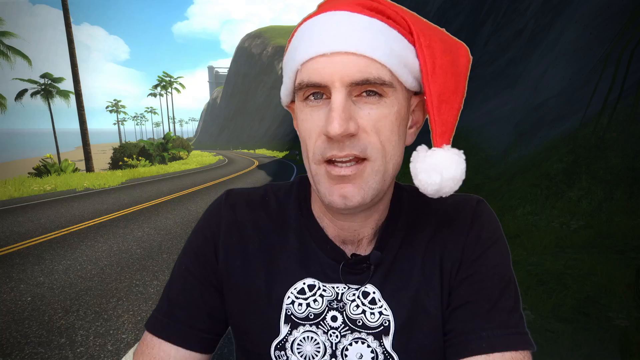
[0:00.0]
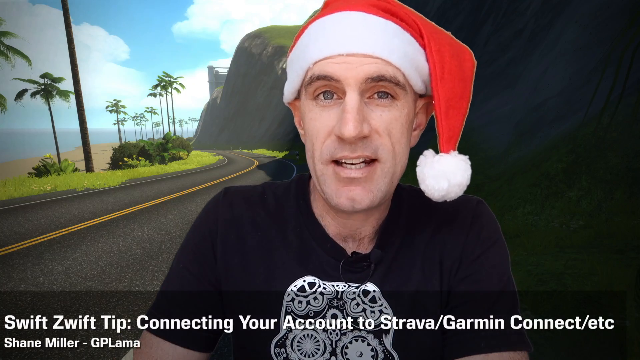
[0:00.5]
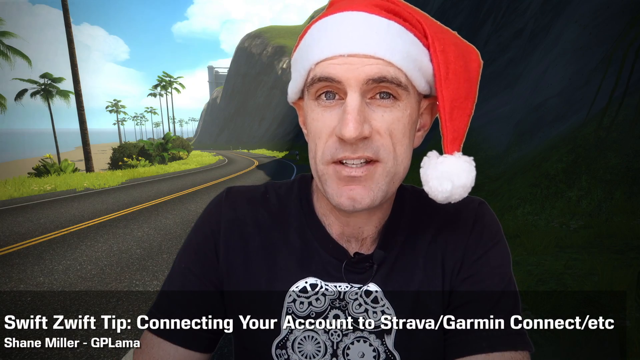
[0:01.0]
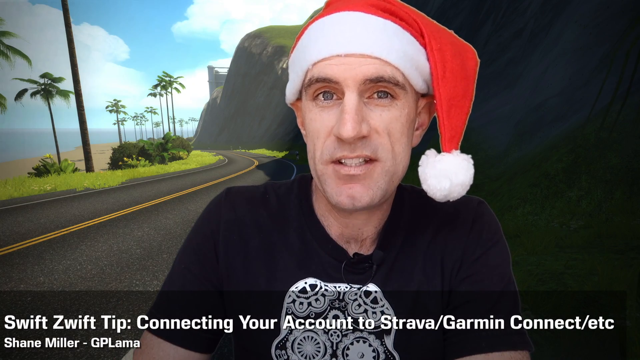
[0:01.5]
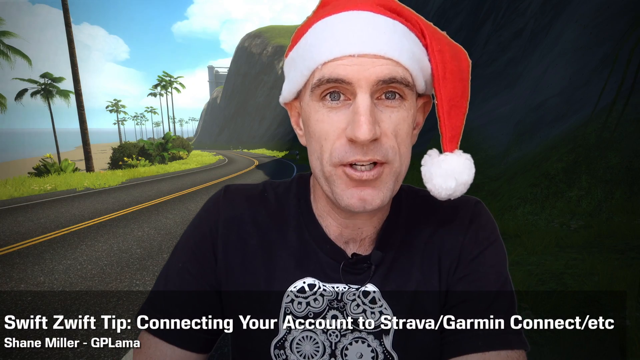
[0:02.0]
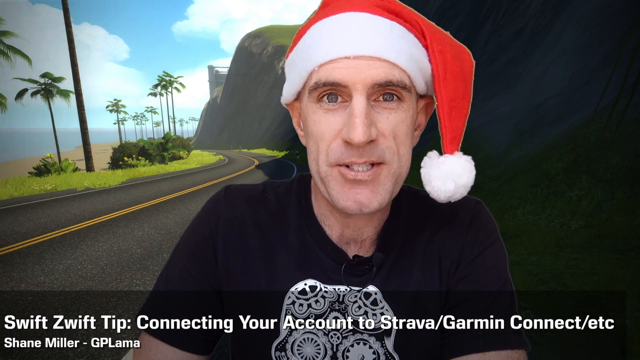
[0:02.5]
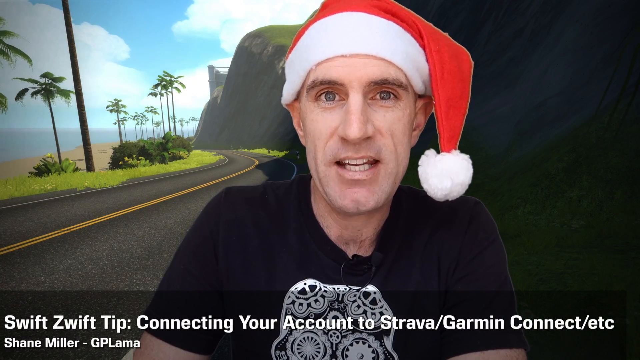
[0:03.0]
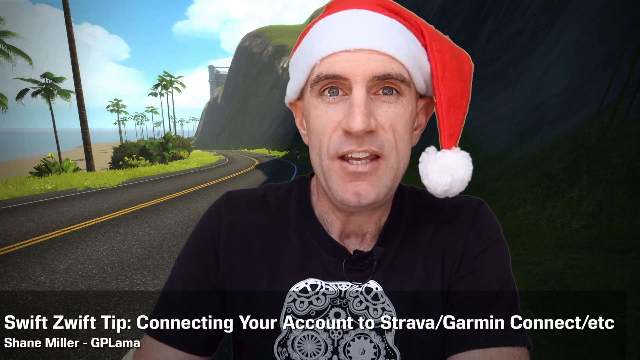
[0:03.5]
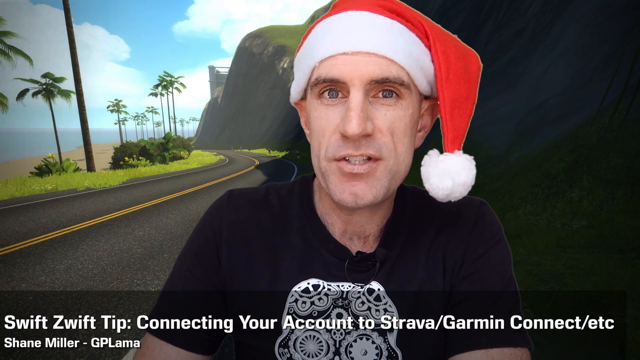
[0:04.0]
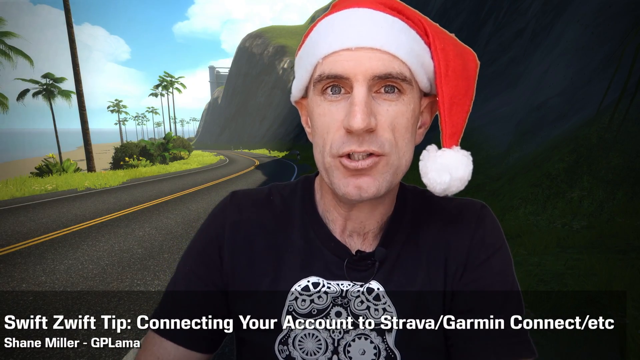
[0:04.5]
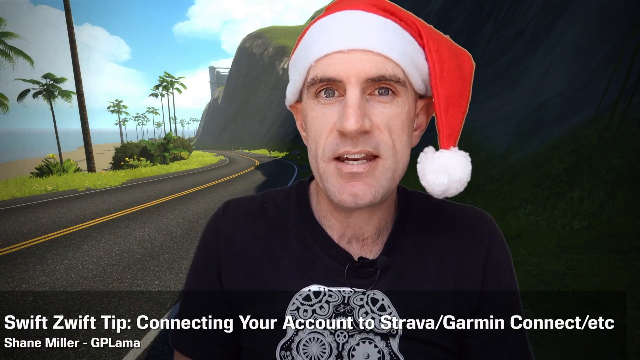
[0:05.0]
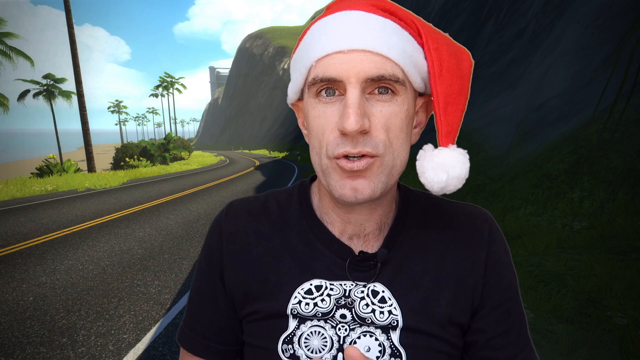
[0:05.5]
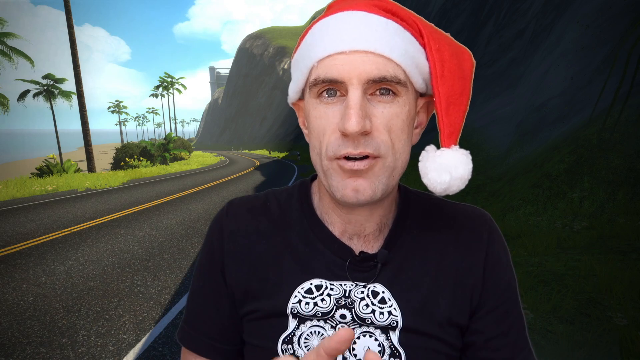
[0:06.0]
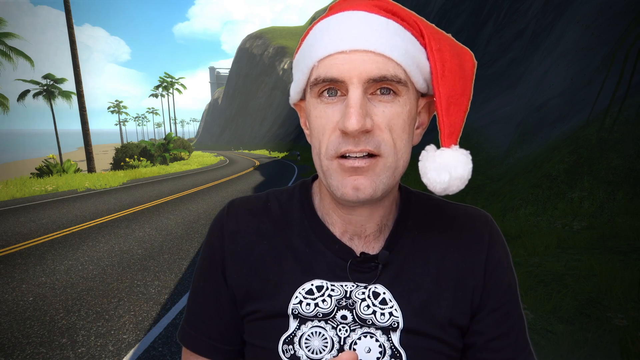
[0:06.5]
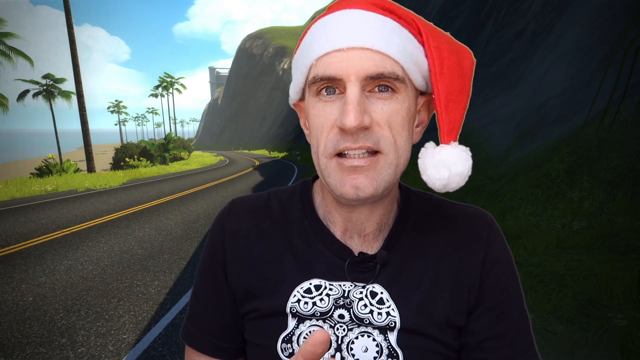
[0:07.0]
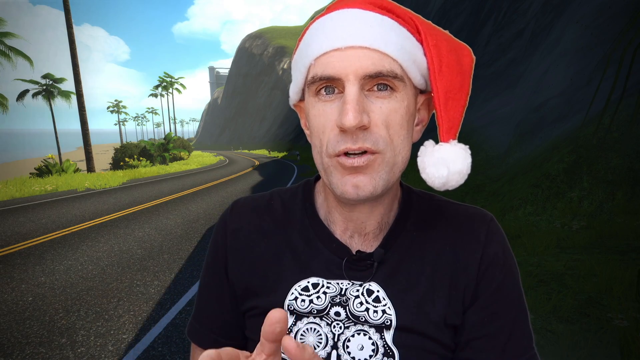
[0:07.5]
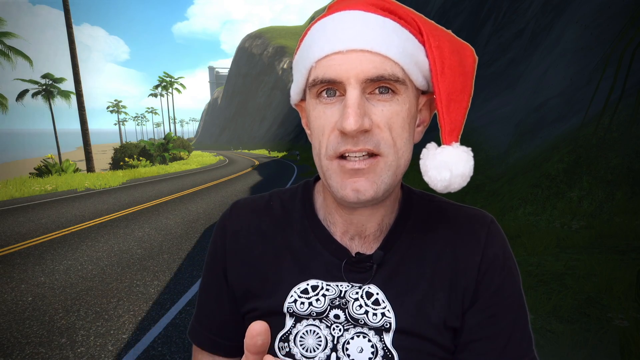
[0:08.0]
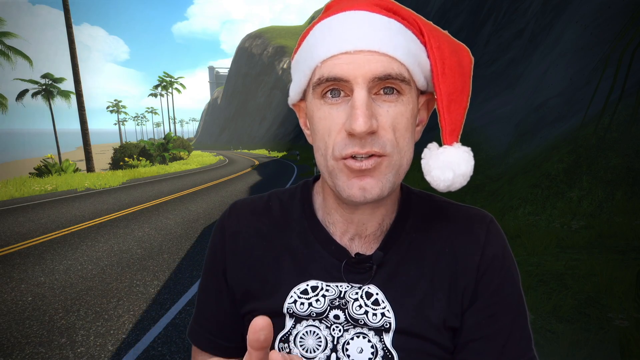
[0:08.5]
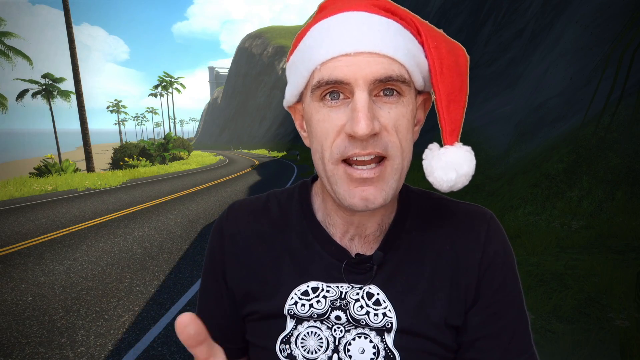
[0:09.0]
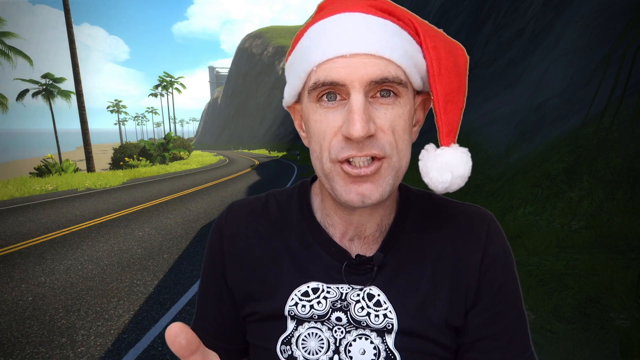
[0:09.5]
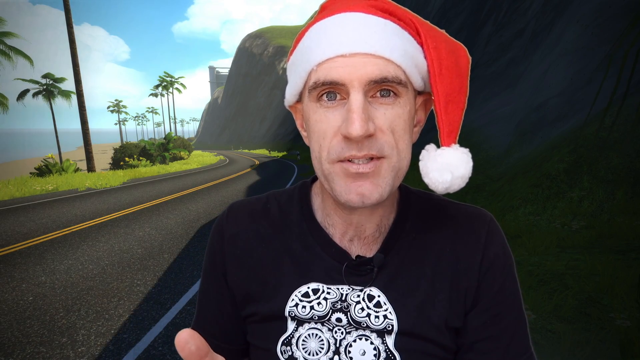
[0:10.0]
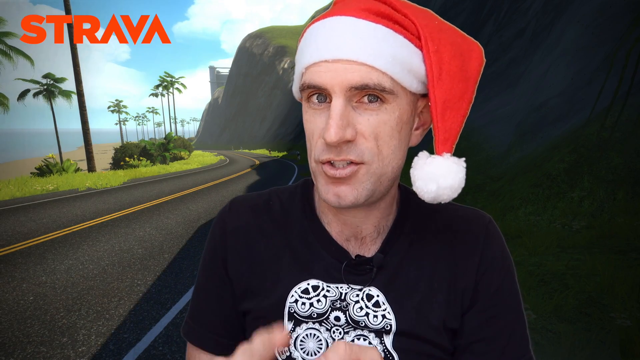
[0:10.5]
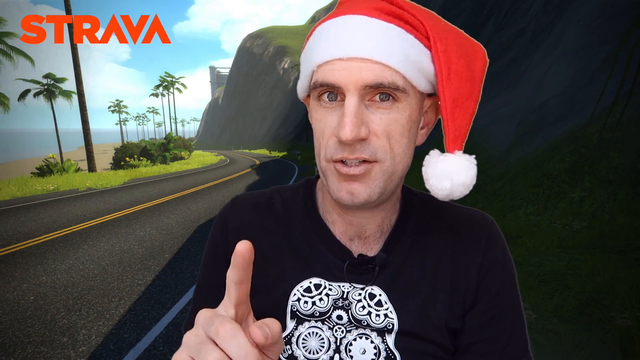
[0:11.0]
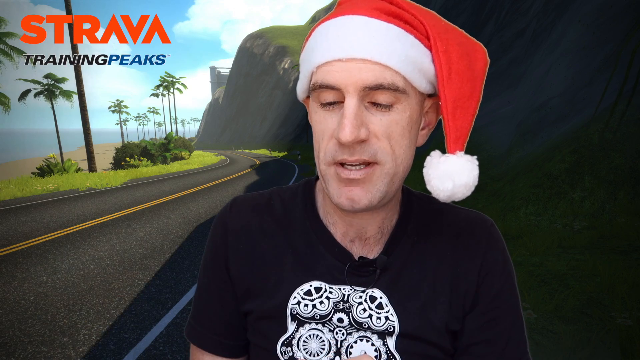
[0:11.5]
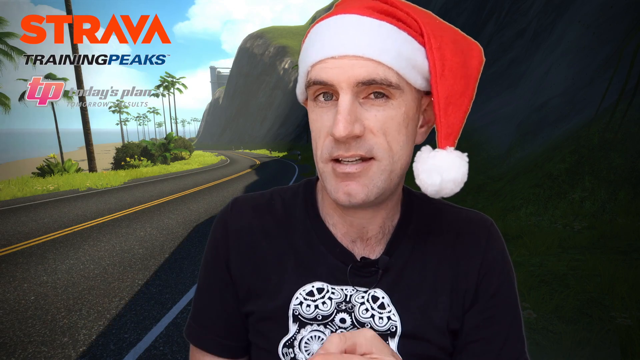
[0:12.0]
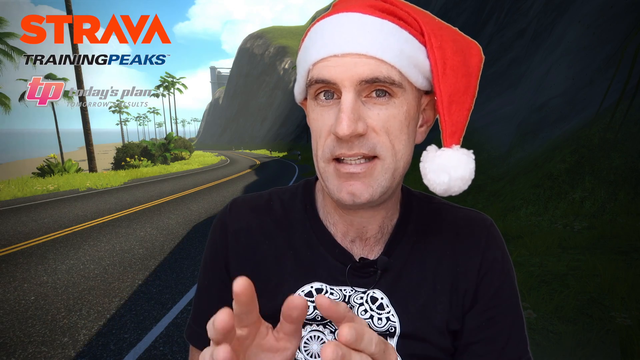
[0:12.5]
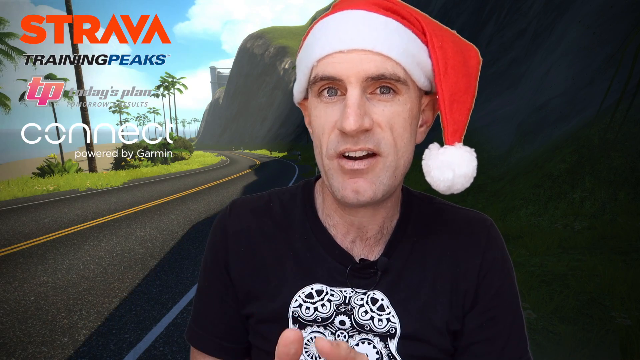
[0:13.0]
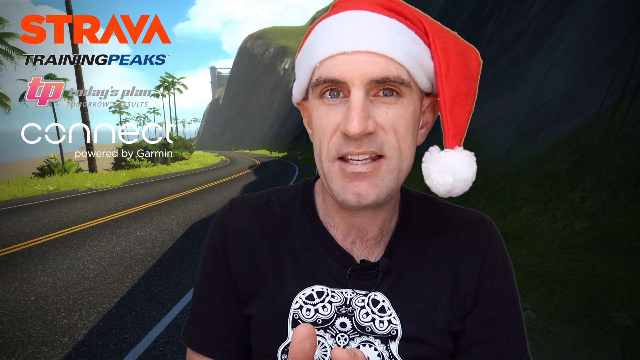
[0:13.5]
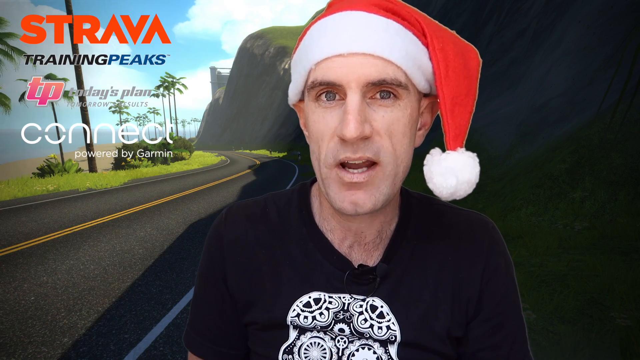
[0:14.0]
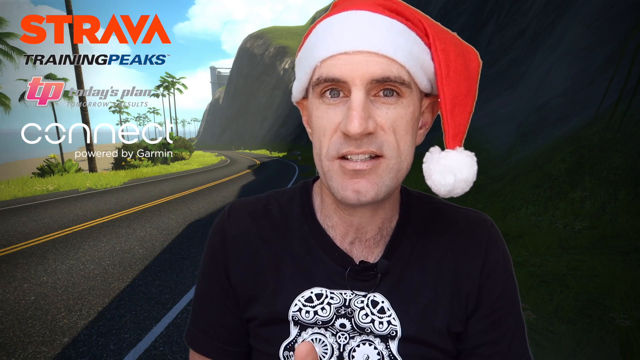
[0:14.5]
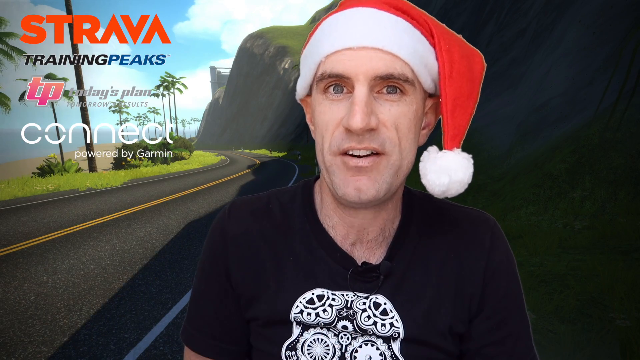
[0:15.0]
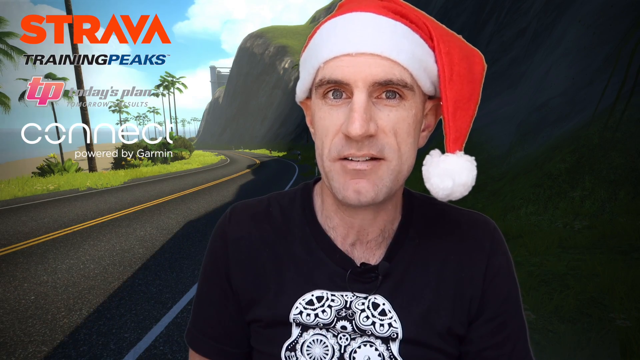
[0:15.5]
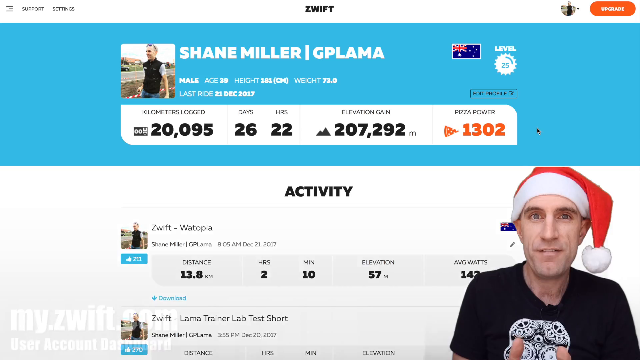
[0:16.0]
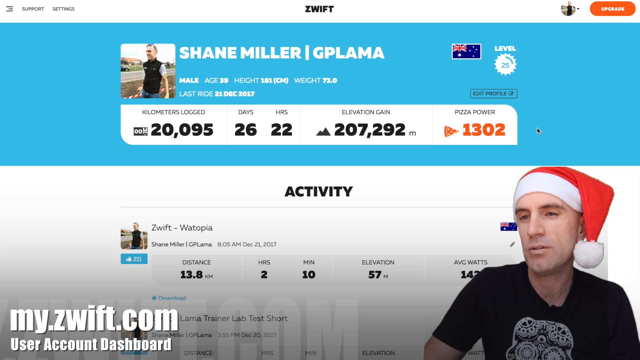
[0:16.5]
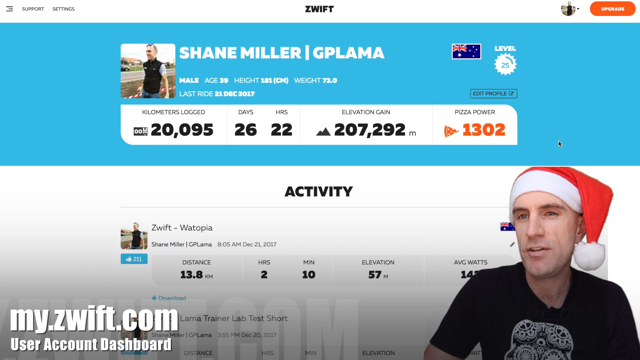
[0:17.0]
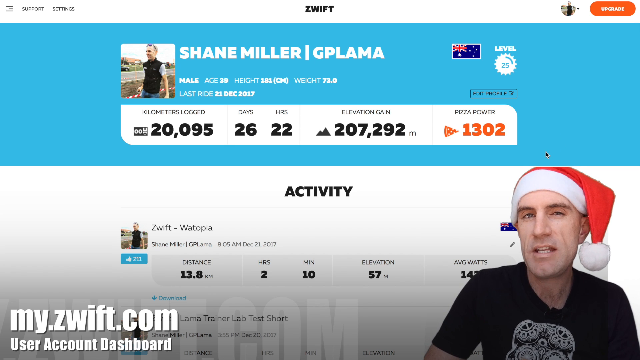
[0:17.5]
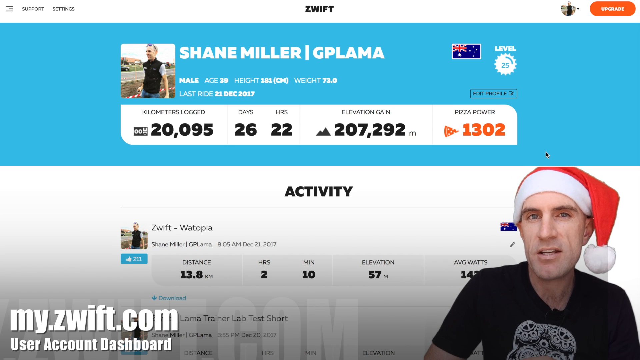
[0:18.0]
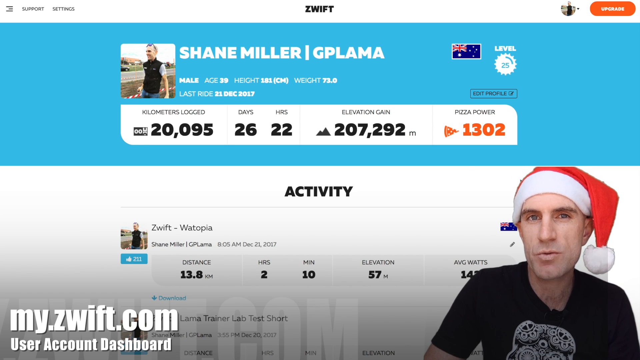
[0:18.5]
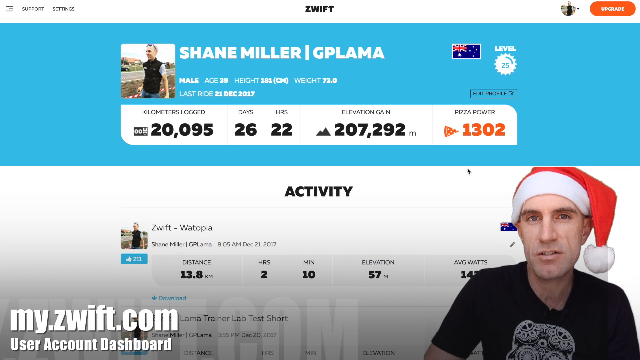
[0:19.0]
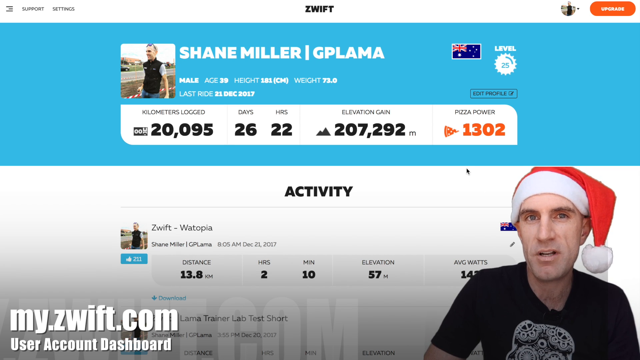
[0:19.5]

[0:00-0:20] A man sits close to the camera, framed from roughly halfway up his torso to his head. He wears a black t-shirt with a white pattern that looks like possibly some kind of Dia de los Muertos skull pattern, and a Santa hat. Behind him, on a green screen, is an image of a road with palm trees and a blue sunny sky. Partway through, he puts up four company logos on the screen, each a different color: Strava, Training Peaks, one whose grey text is unreadable, and Connect. After the logos, he switches the green-screen background from the palm-lined road to a website, which looks like possibly some kind of financial website.